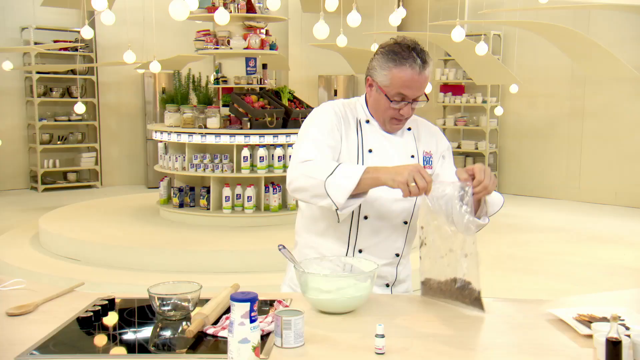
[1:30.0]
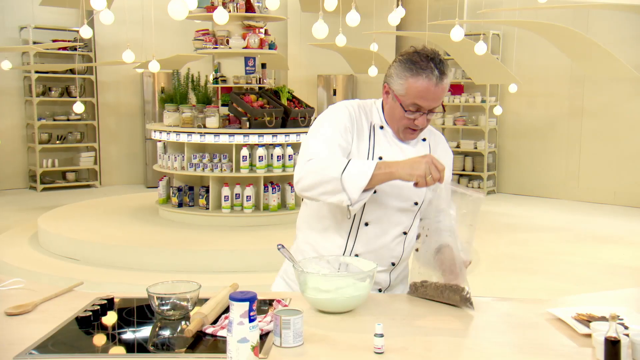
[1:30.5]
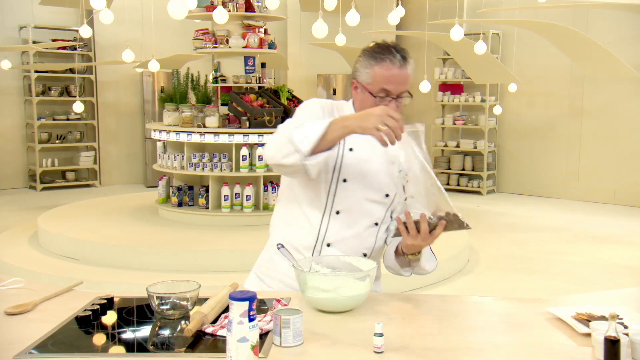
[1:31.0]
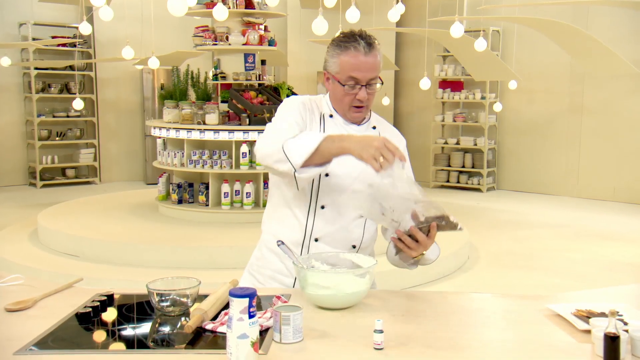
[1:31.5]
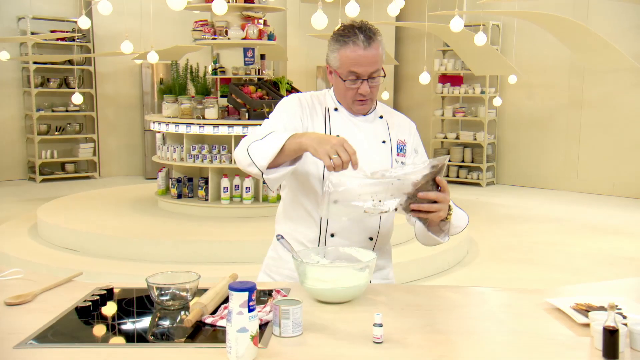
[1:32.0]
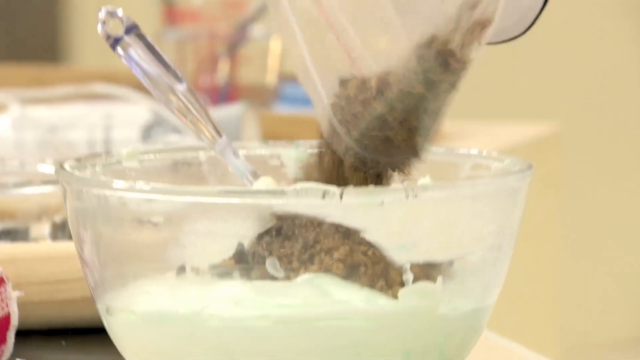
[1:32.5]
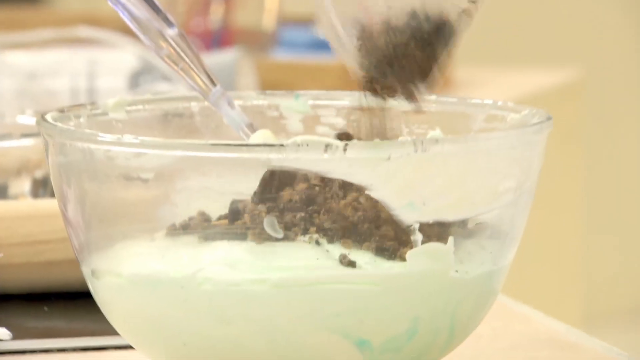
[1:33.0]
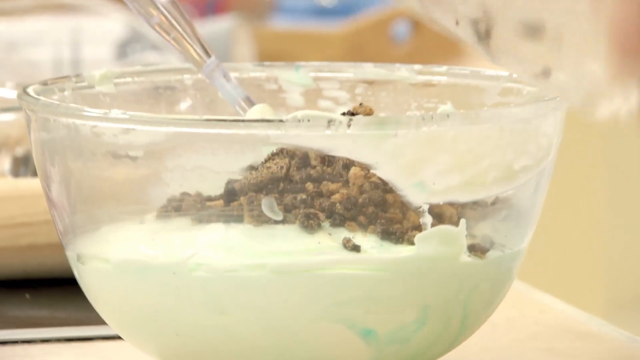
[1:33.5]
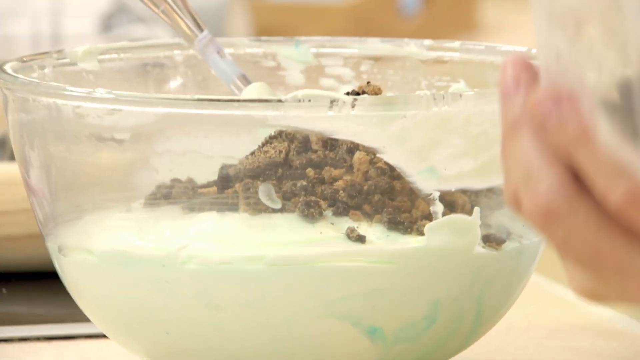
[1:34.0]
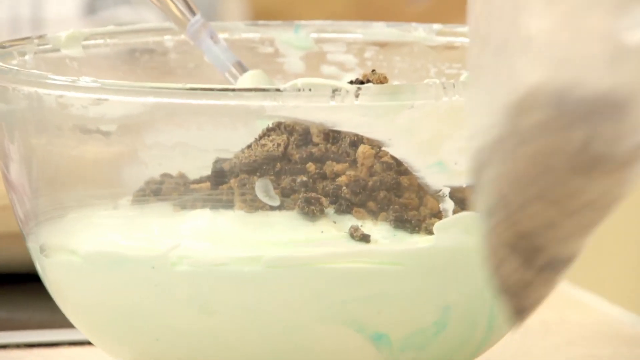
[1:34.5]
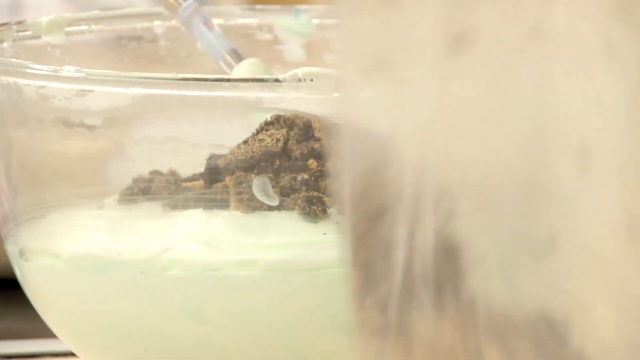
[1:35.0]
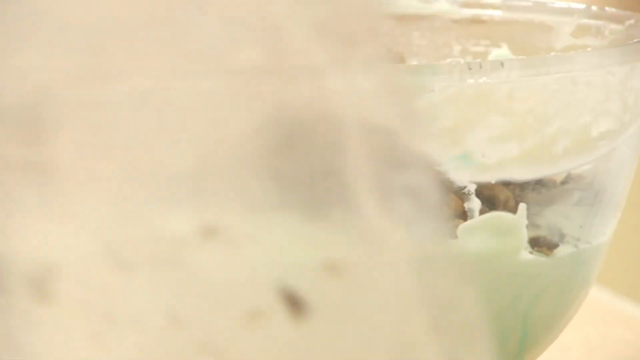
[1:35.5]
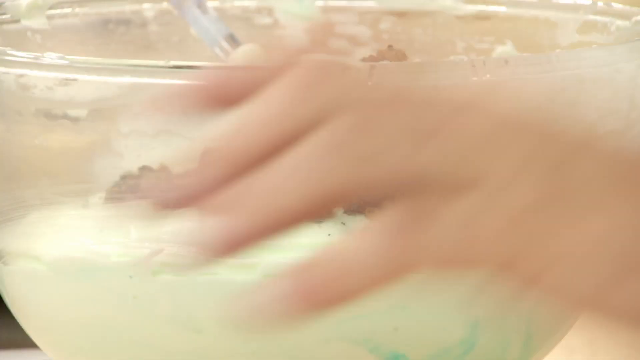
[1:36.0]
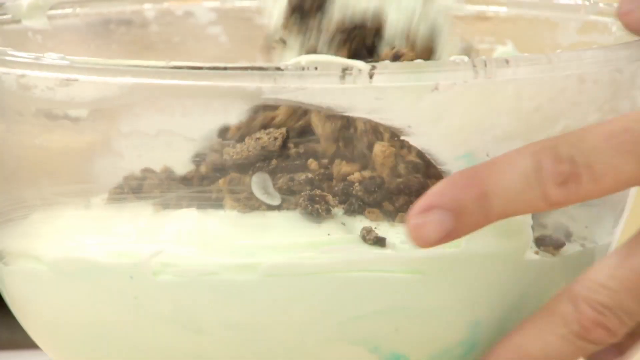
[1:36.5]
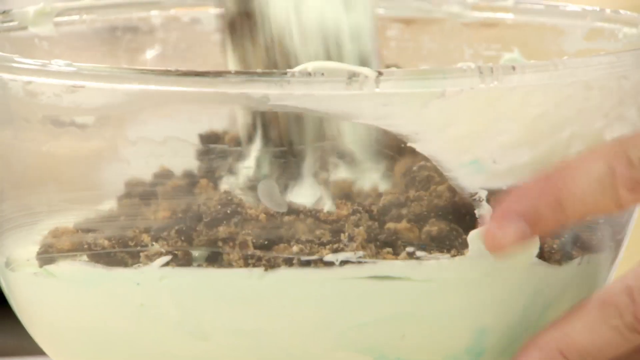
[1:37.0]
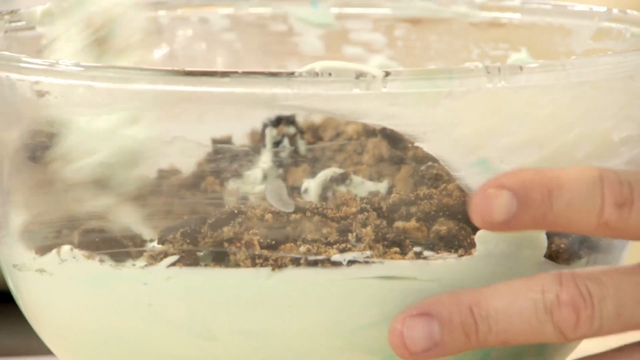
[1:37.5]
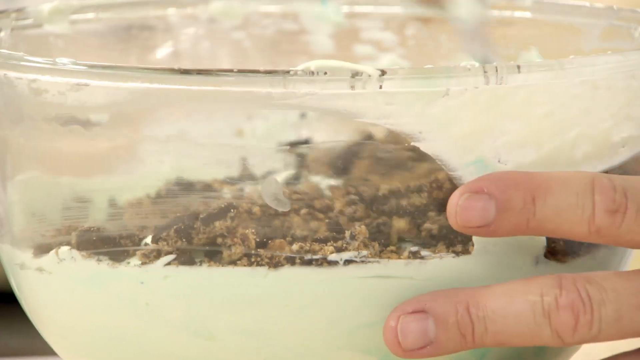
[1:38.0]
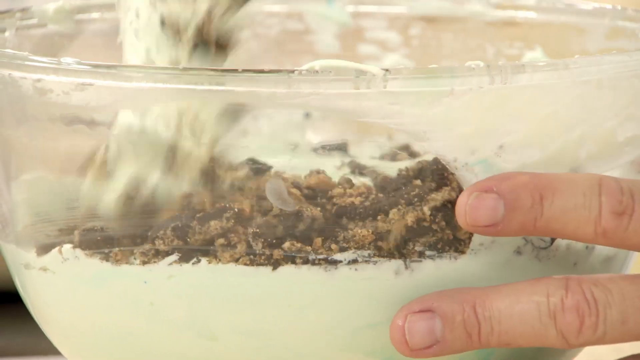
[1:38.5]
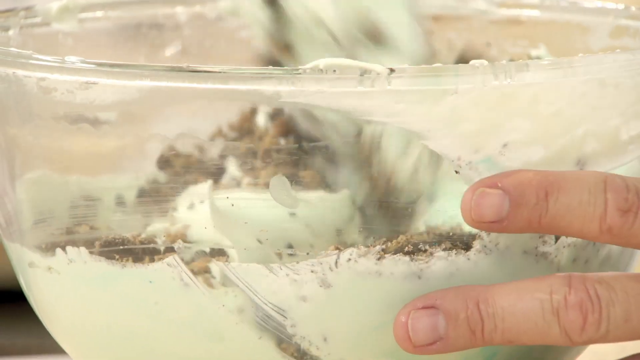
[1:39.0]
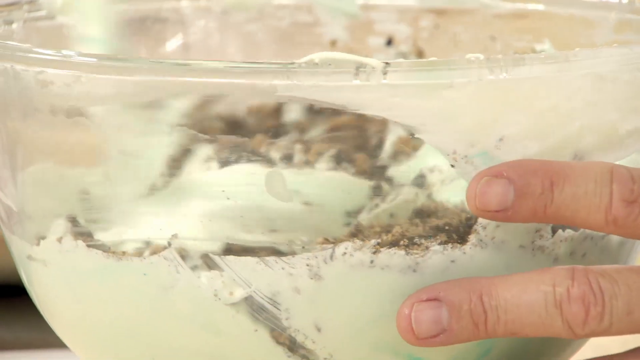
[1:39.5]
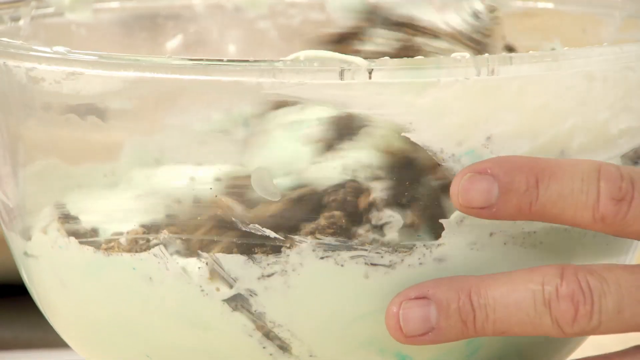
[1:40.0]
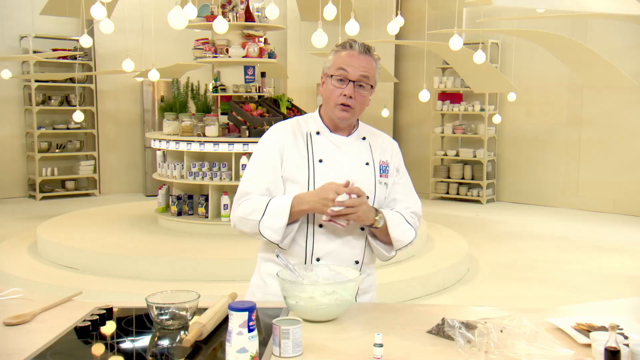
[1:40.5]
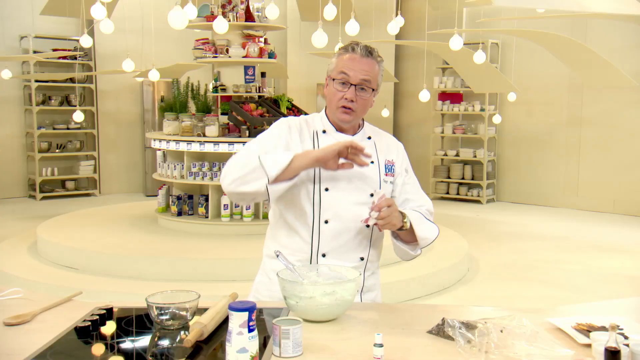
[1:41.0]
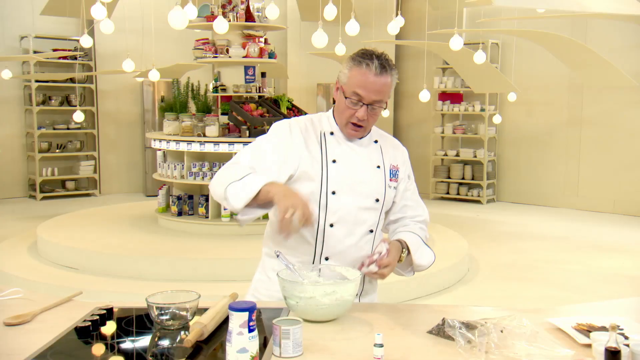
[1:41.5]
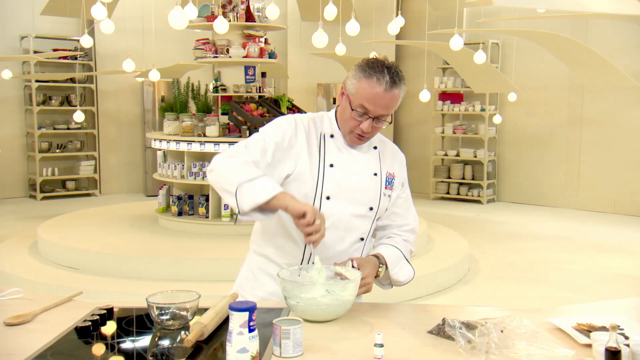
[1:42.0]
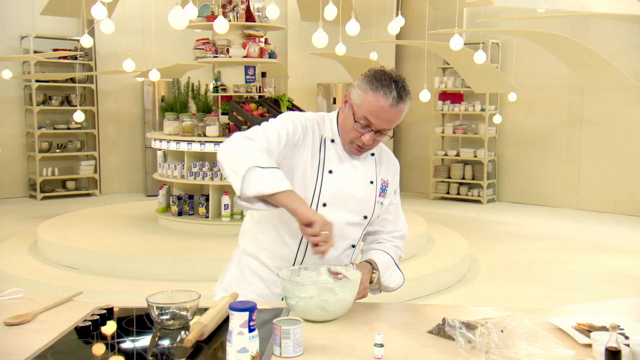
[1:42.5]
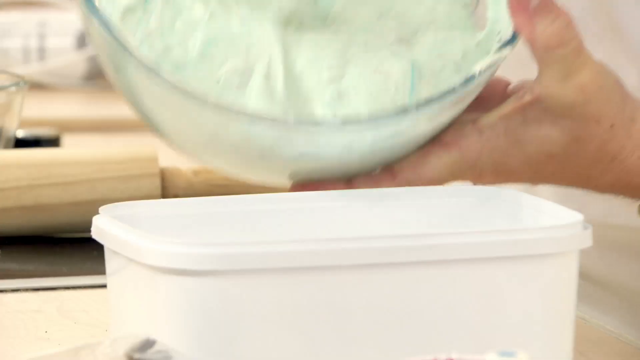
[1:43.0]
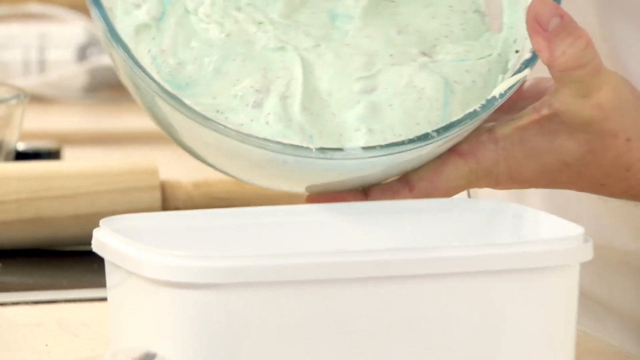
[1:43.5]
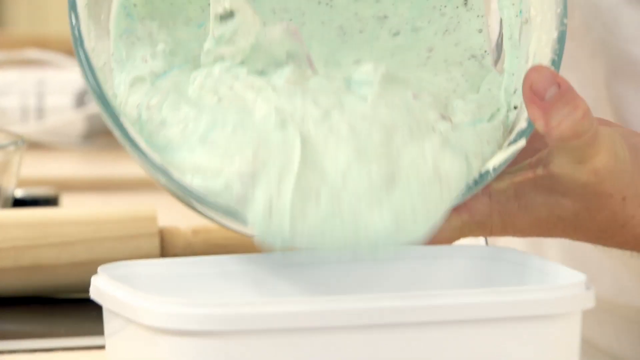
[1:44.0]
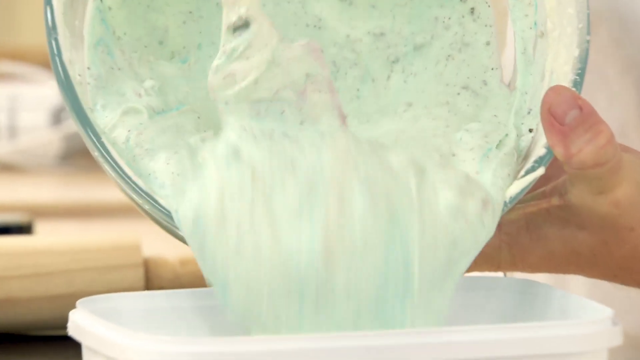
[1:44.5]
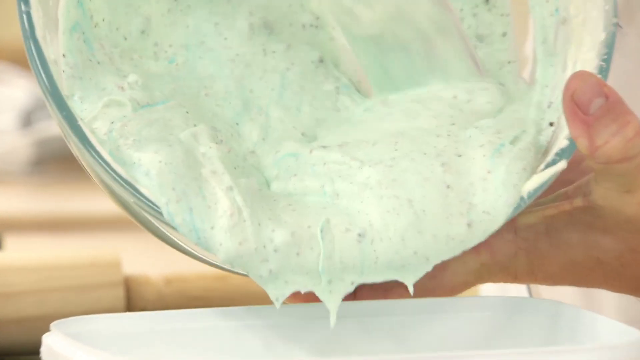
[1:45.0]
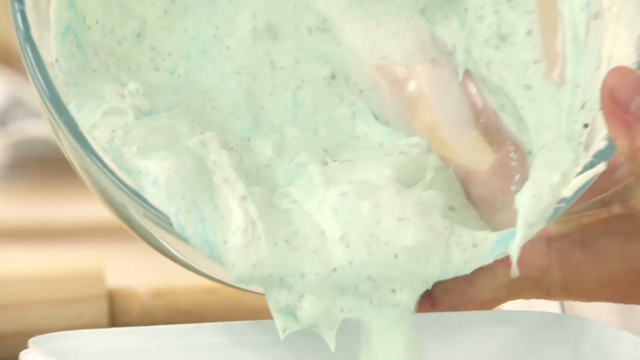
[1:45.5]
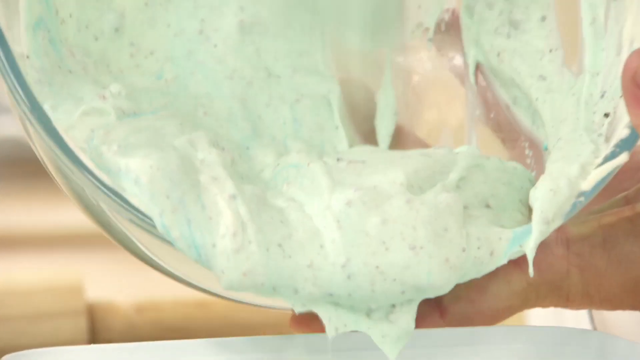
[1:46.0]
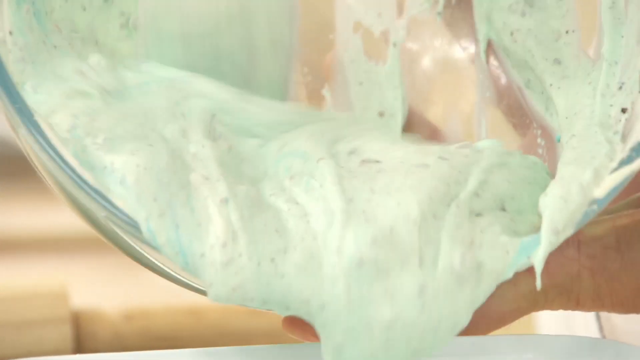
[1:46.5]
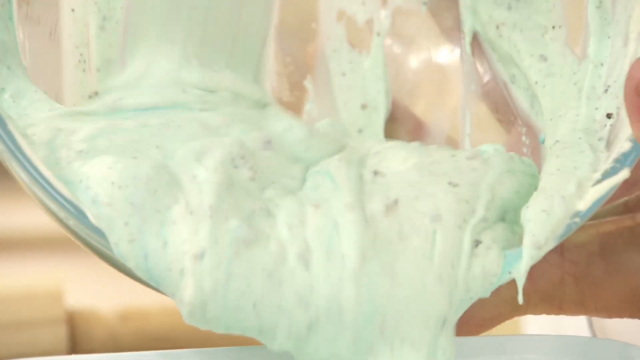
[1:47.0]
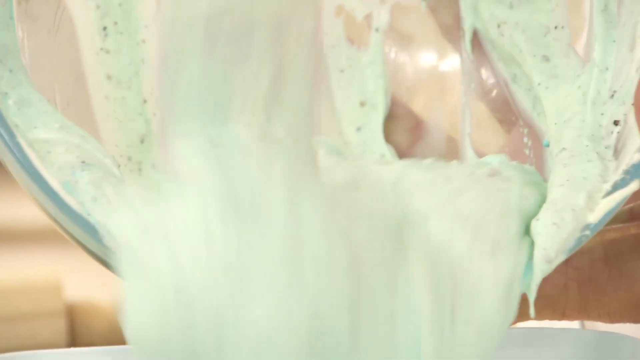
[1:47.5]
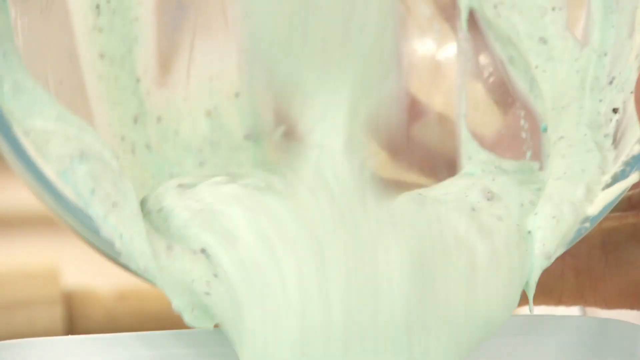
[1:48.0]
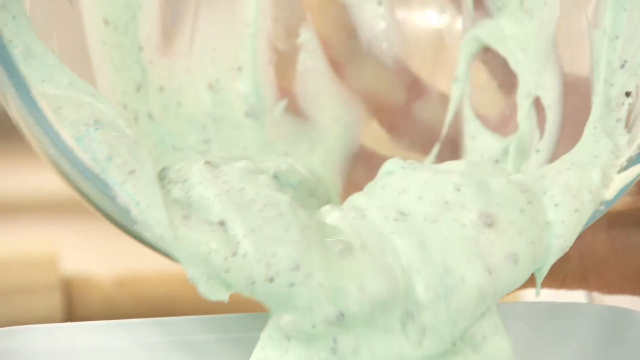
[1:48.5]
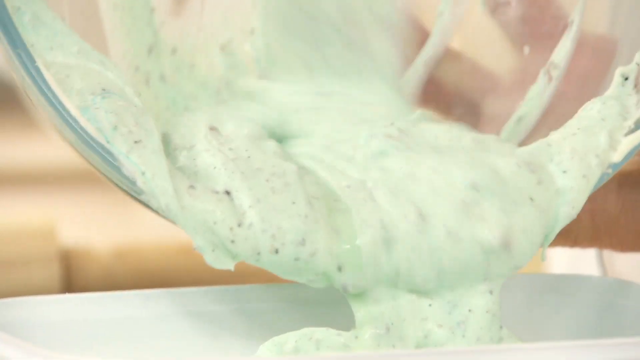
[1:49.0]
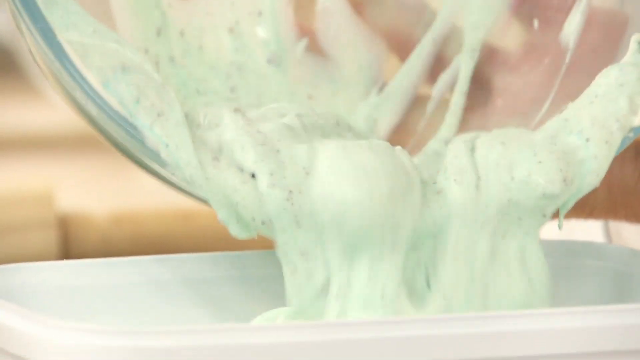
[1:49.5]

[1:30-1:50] The chef holds the clear plastic bag of crumbled cookies, tips it over, and pours the cookie bits into the clear bowl. The camera zooms in on the bowl, showing the cookies on top. With one hand on the bowl, he uses a spatula in the other to mix the cookies into the cream. The camera zooms out to show him to about the waist, looking down with the spatula in hand, stirring in a circle to fully combine the cookies and cream. He then pours the contents of the clear bowl into a white container, and a close-up shows the spatula moving the cream out of the bowl into the container.